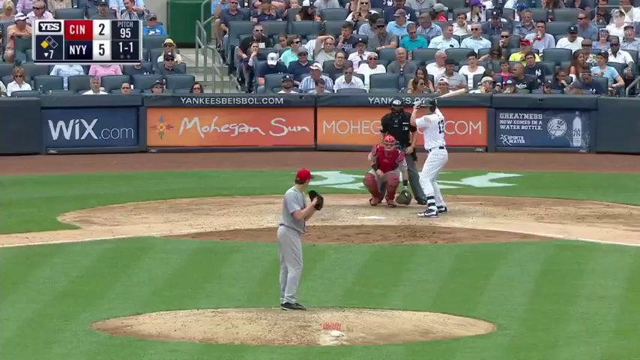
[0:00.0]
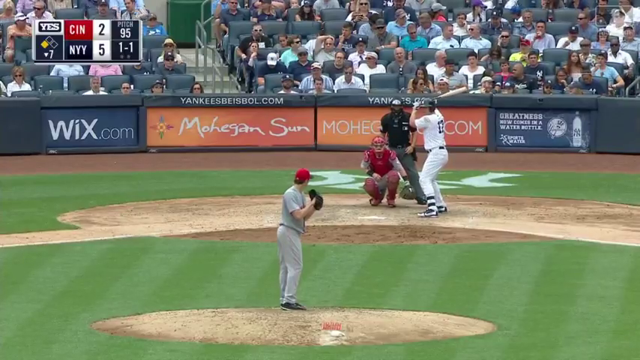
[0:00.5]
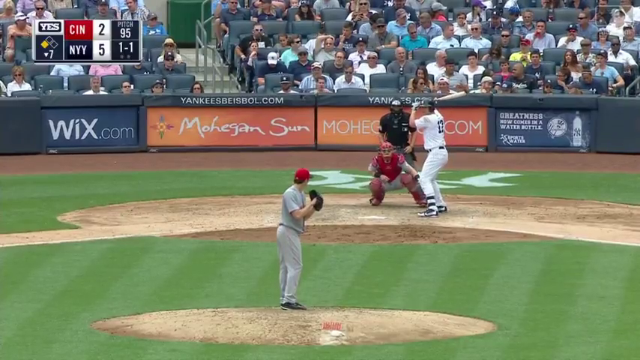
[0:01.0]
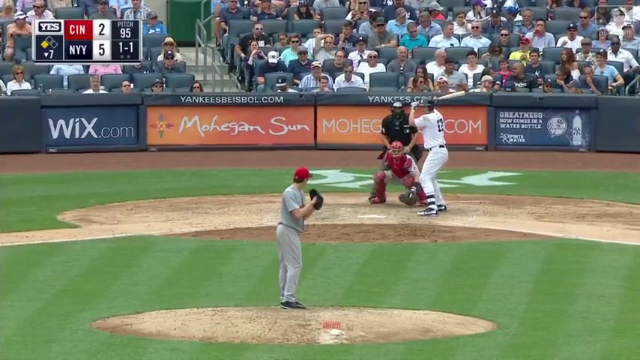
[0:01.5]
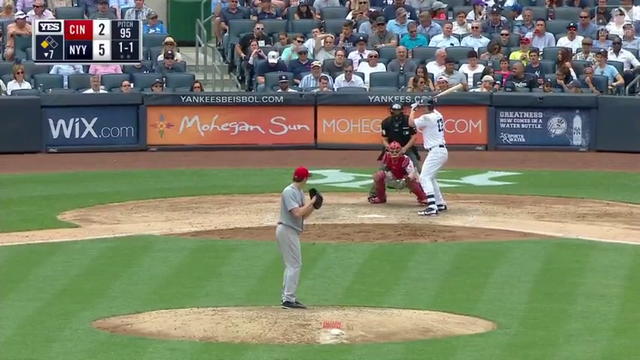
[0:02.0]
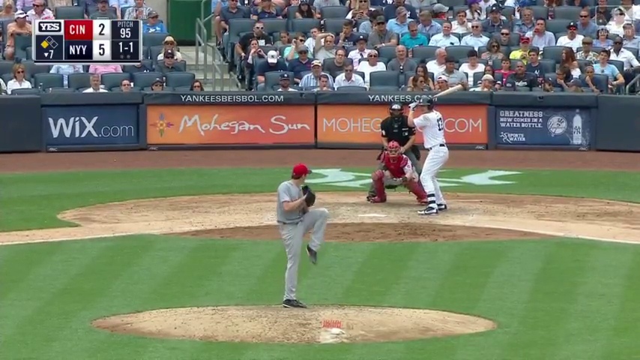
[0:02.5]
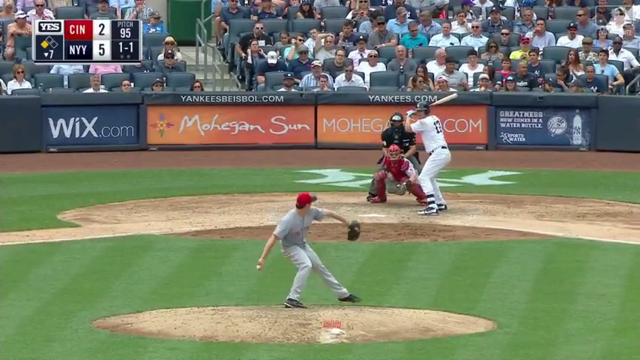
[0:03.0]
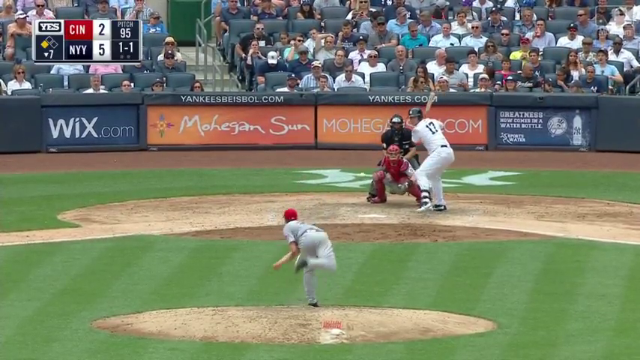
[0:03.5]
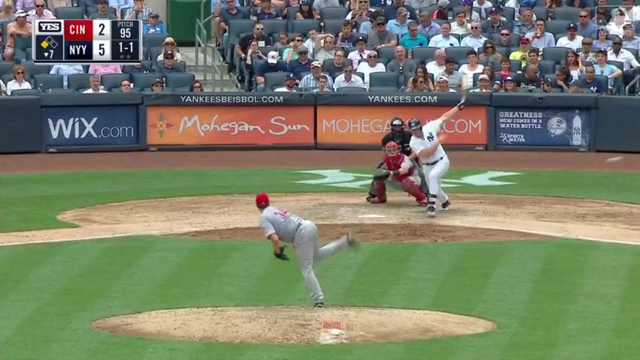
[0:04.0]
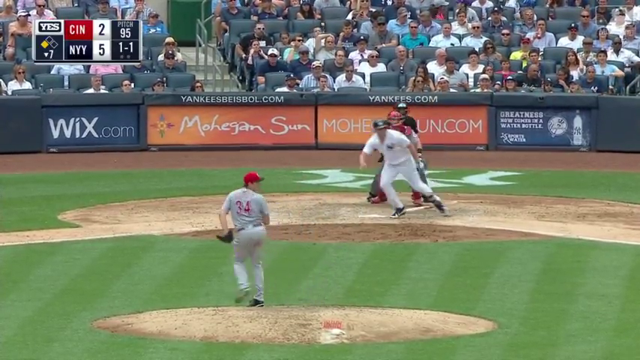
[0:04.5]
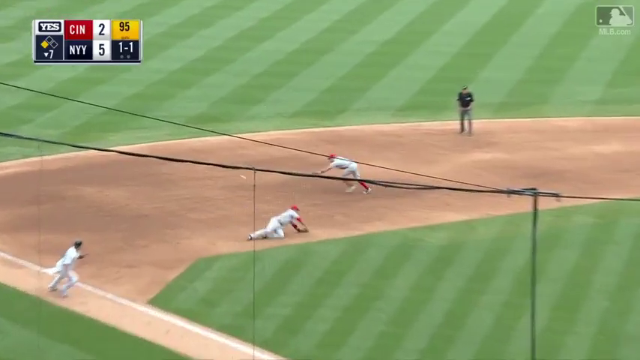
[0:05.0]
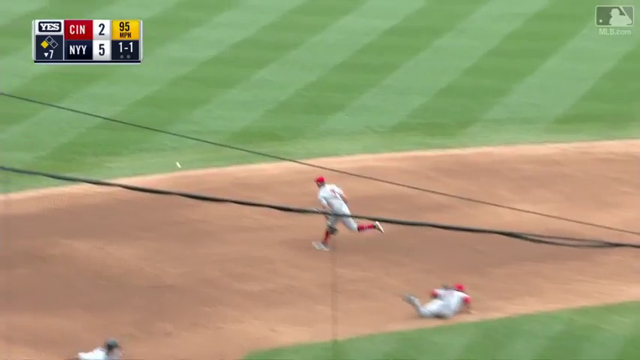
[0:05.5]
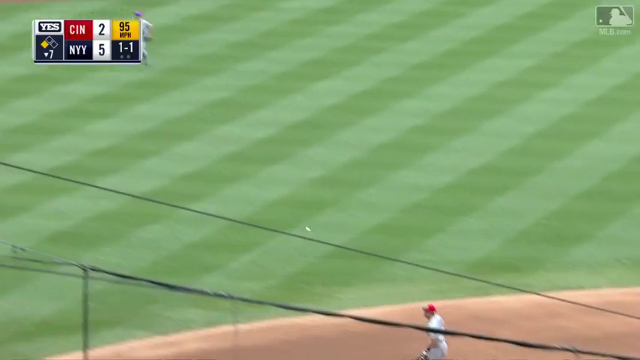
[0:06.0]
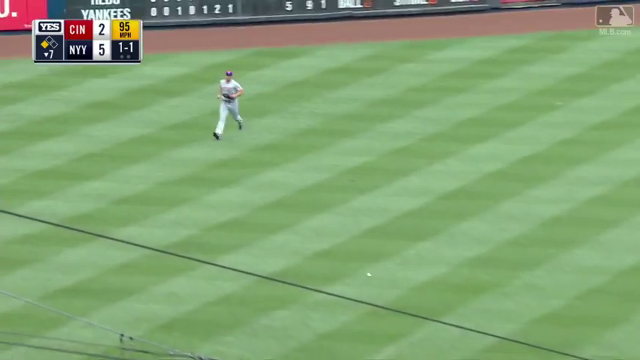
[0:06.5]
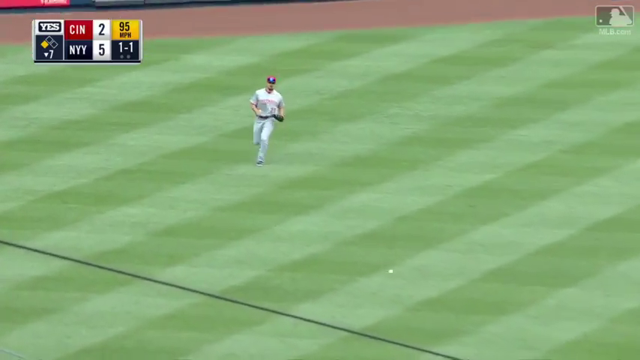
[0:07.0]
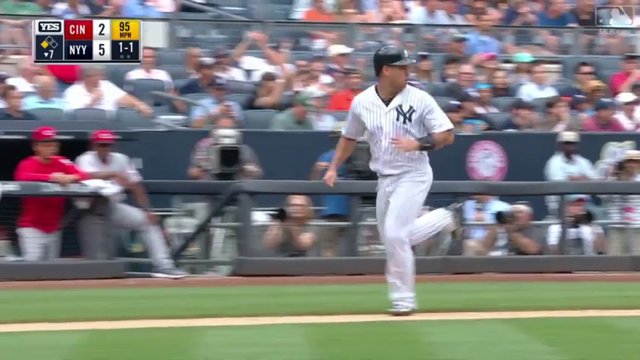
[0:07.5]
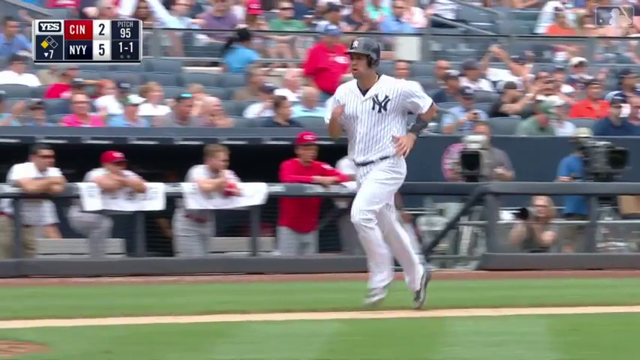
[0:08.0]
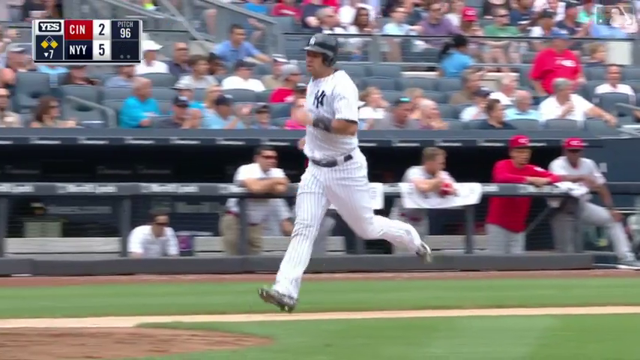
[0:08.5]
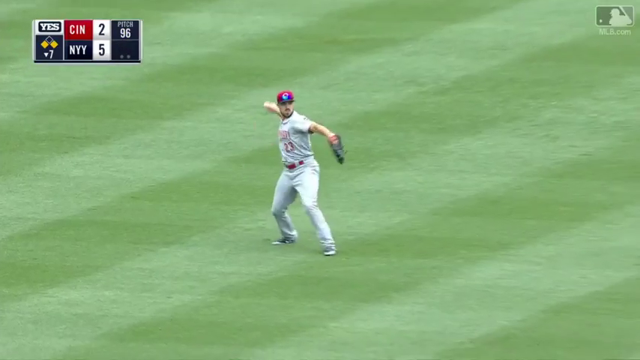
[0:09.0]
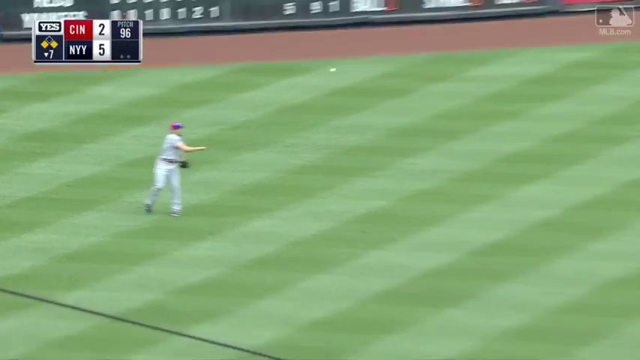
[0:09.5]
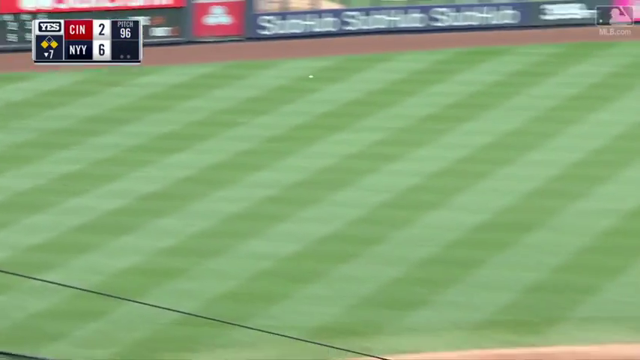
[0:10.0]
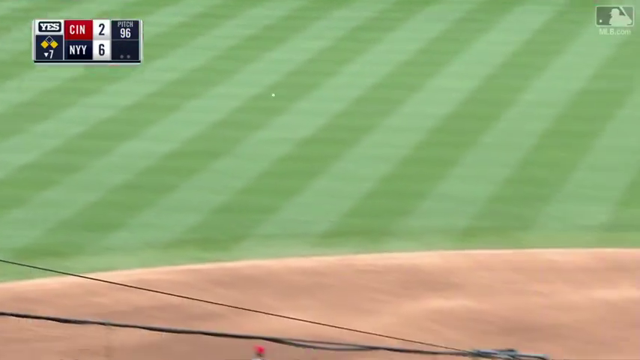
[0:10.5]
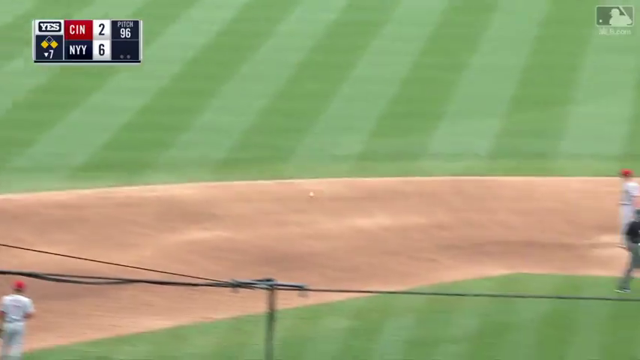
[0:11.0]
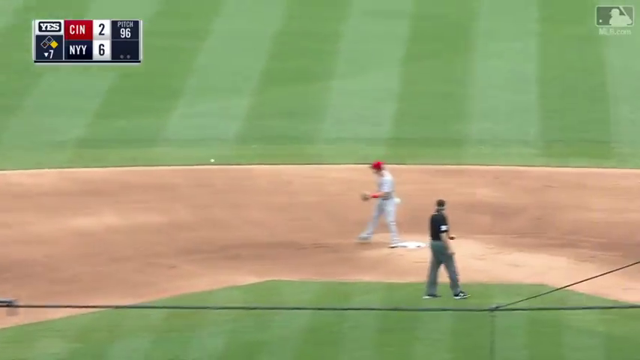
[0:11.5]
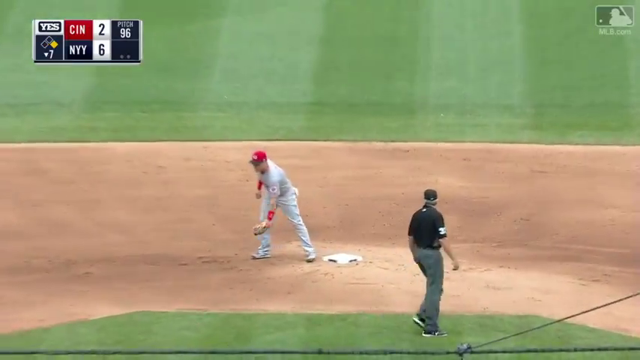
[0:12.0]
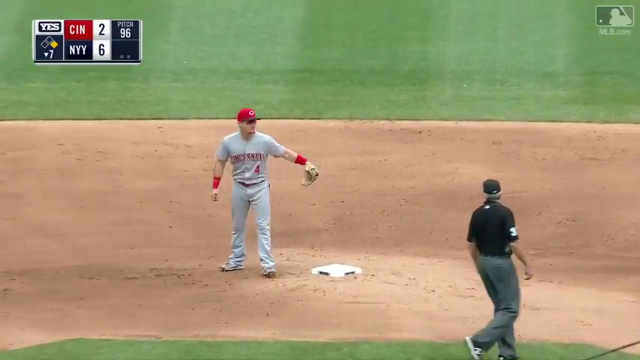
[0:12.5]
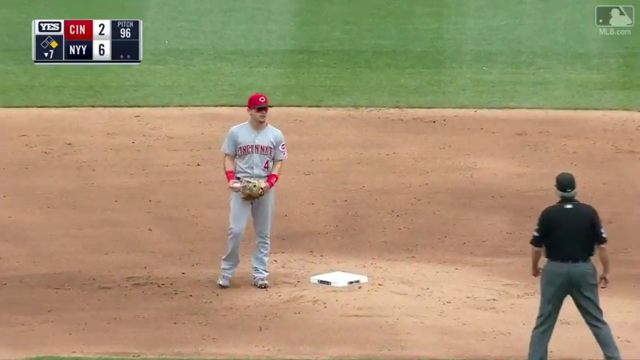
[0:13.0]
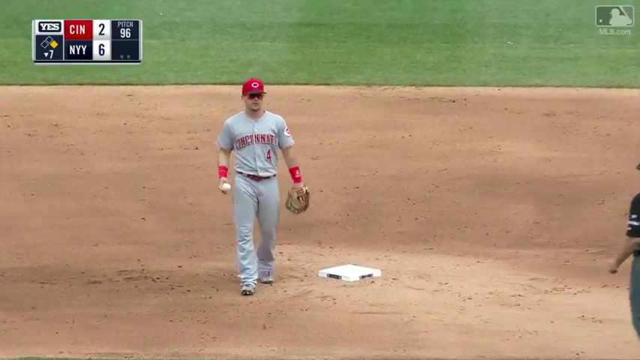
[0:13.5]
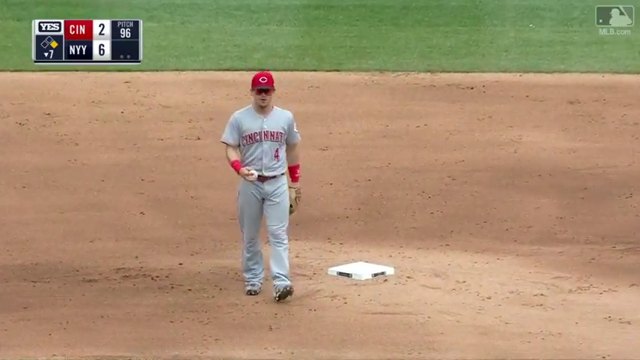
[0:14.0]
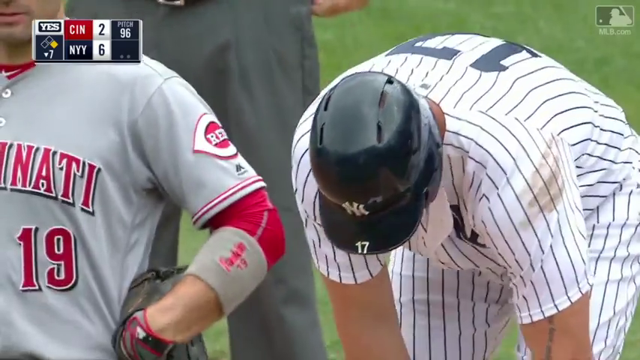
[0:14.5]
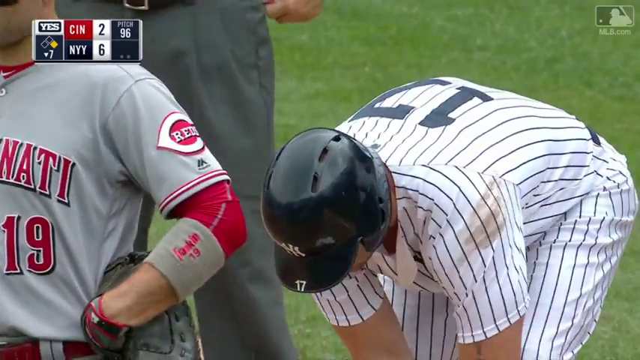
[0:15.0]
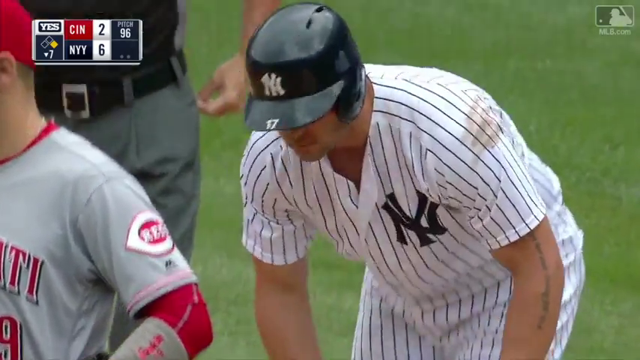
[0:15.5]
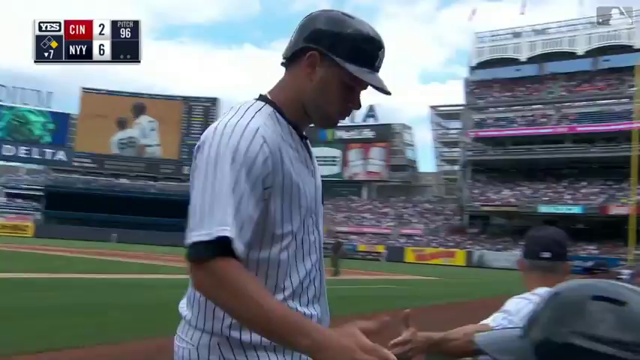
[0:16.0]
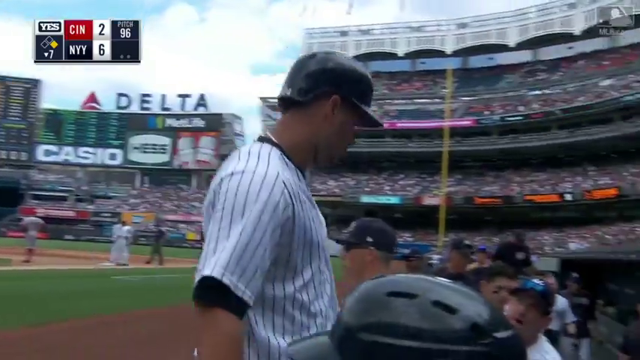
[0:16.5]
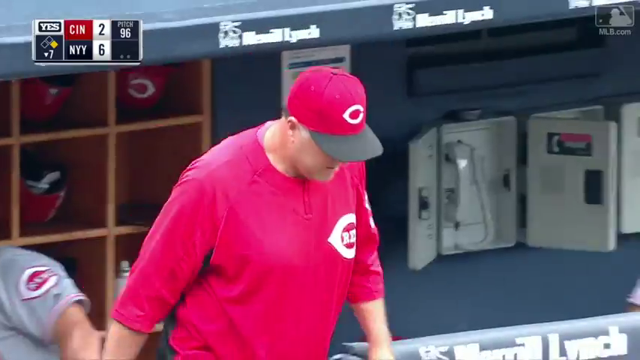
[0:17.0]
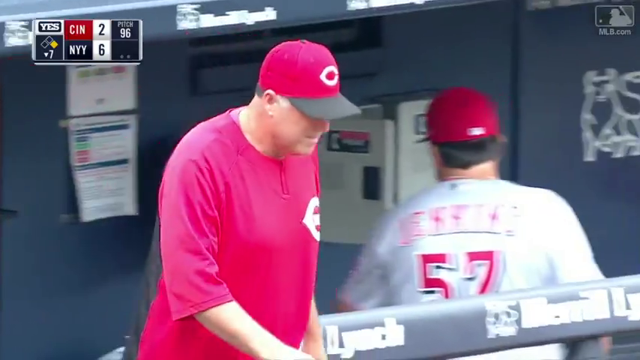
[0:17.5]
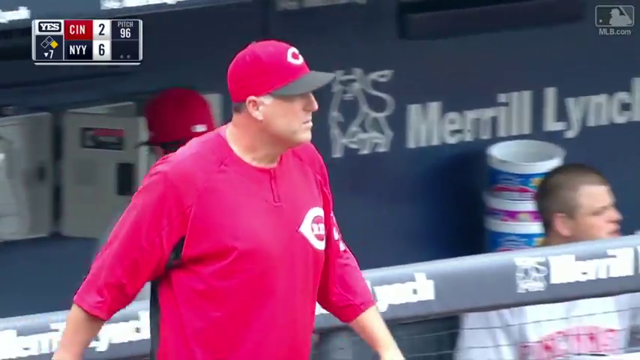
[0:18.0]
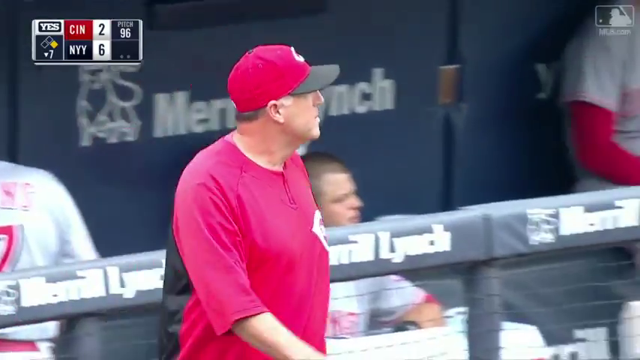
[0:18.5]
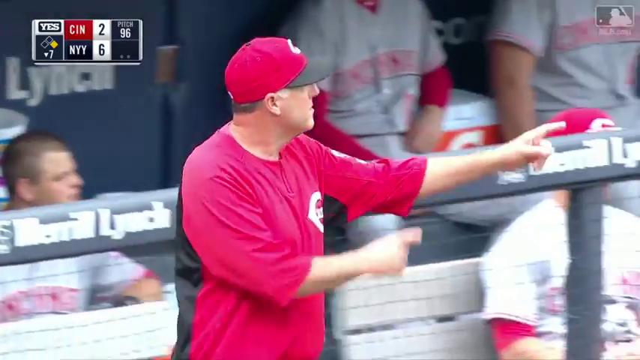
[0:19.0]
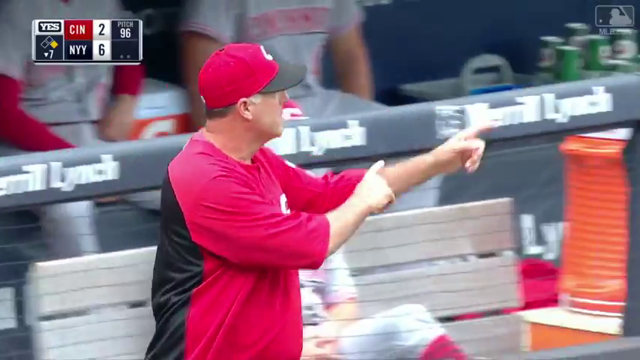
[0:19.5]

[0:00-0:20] At a baseball game, the view looks from center field in at the pitcher and home plate. A graphic in the upper left-hand corner shows the Cincinnati Reds versus the New York Yankees, with the Yankees winning 5 to 2 in the bottom of the seventh, a runner on third base, a 1-1 count, and a last pitch that looks to have been 95 miles an hour. The pitcher is in the stretch, ready to throw home. He throws, and the ball is hit between the third baseman and the shortstop into left field. The Yankees player is shown scoring, and then the view goes back to the left fielder throwing the ball into second base. The Yankees dugout is shown as the Yankees player goes down the dugout and is congratulated. Finally, the coach of the Reds comes out and makes a call to the bullpen to remove the pitcher.